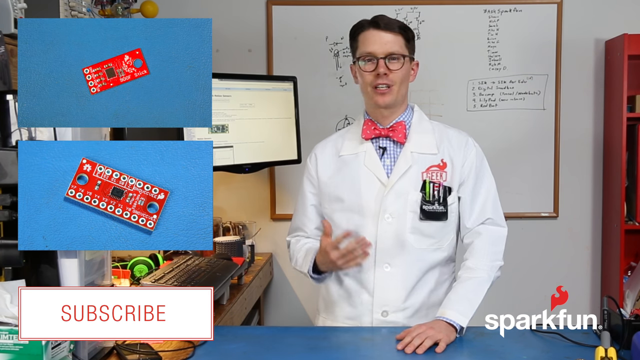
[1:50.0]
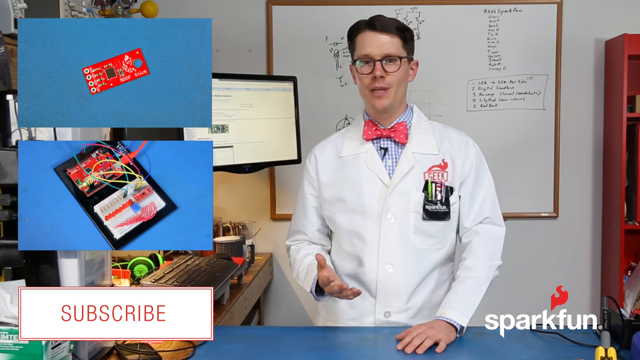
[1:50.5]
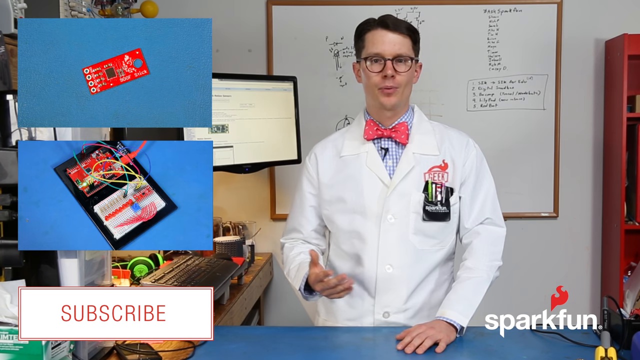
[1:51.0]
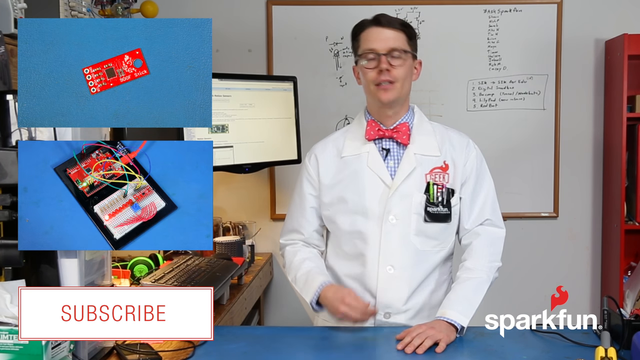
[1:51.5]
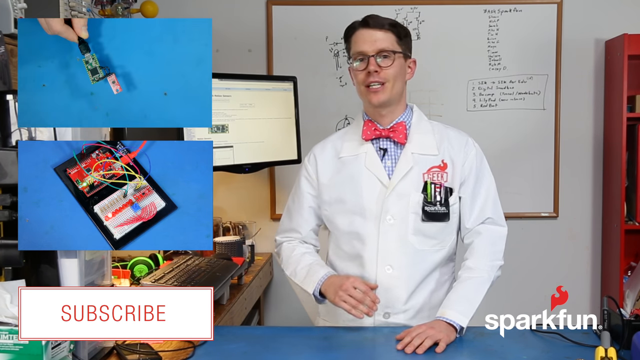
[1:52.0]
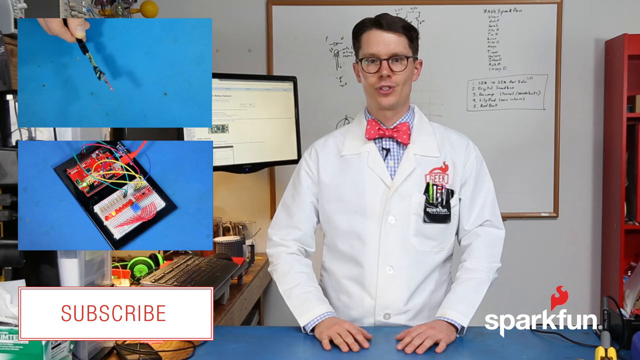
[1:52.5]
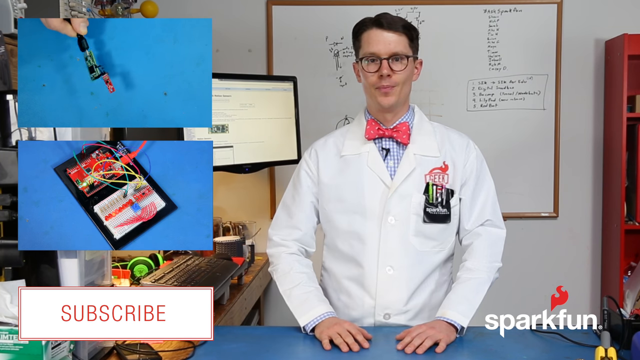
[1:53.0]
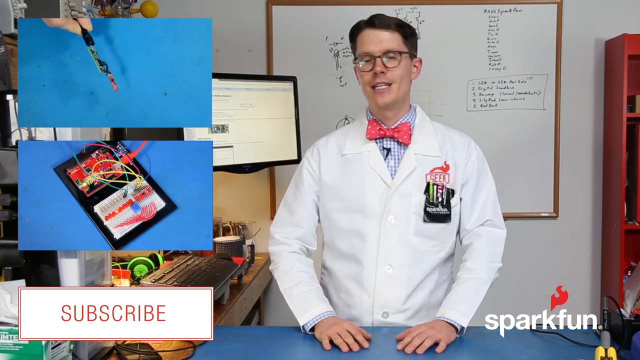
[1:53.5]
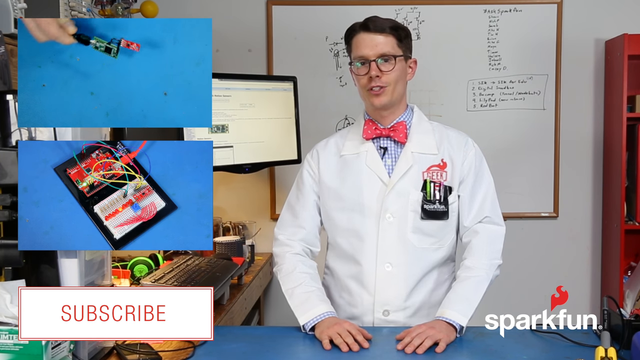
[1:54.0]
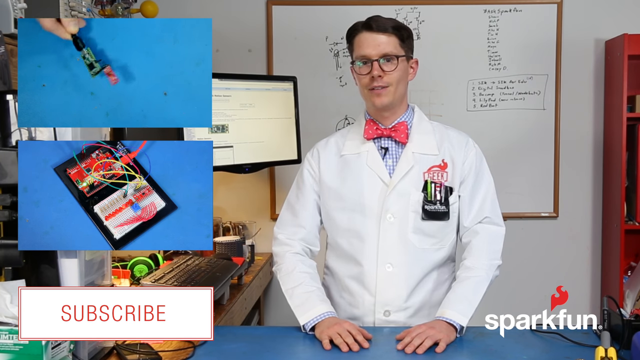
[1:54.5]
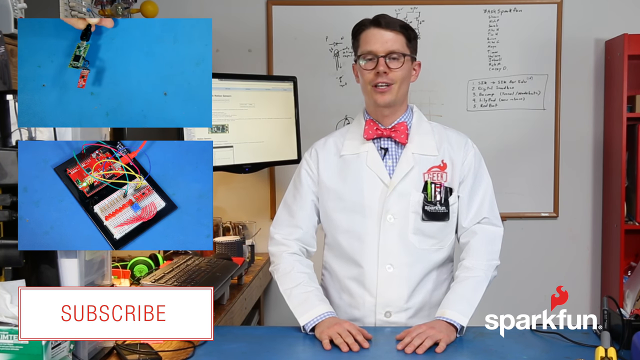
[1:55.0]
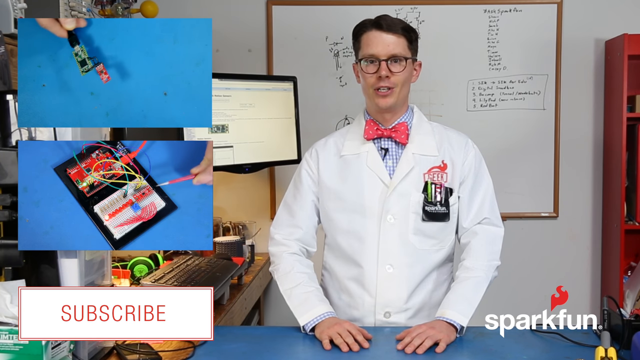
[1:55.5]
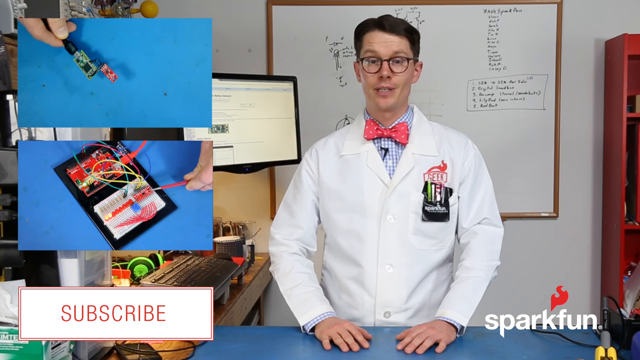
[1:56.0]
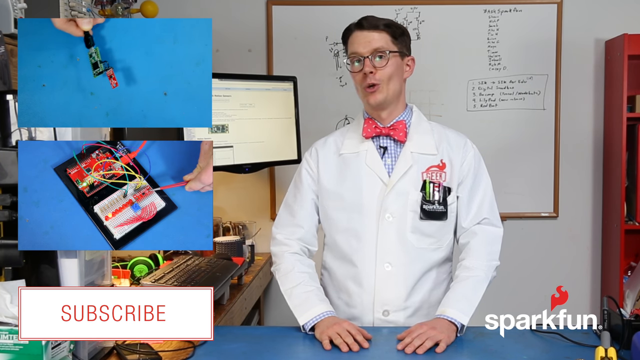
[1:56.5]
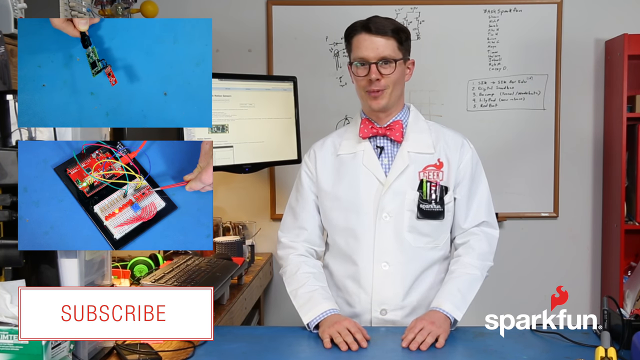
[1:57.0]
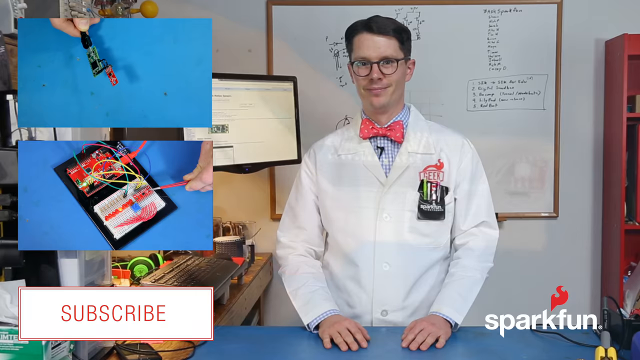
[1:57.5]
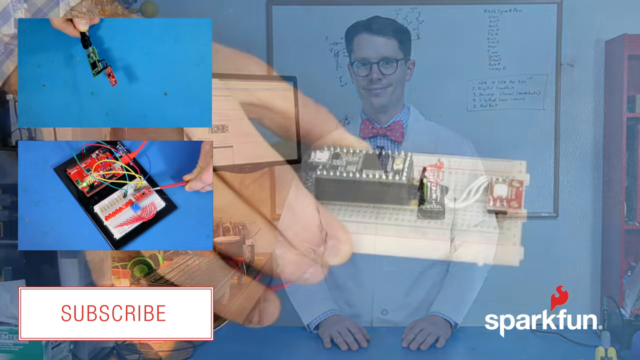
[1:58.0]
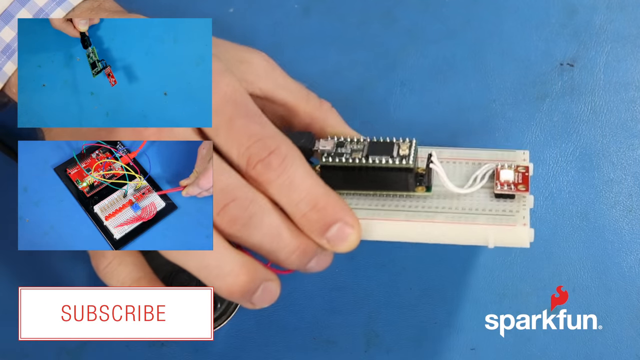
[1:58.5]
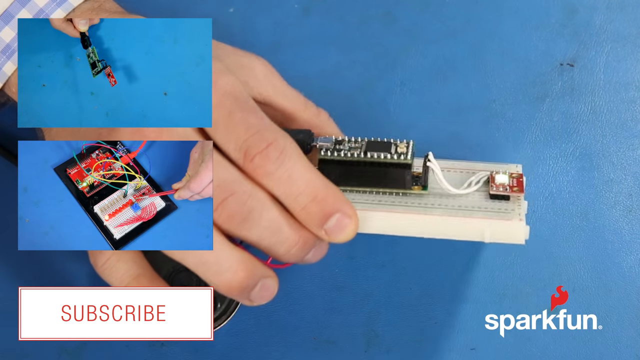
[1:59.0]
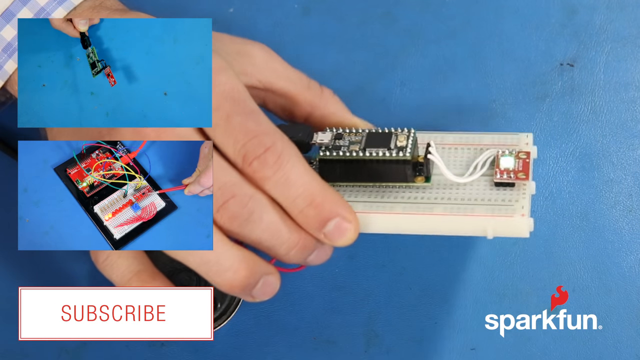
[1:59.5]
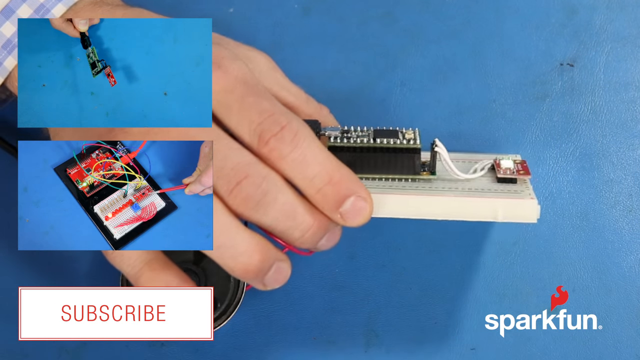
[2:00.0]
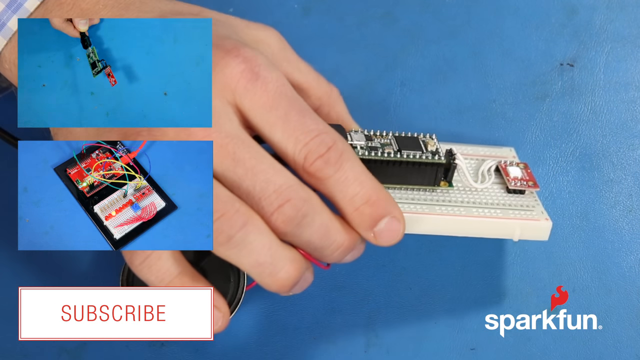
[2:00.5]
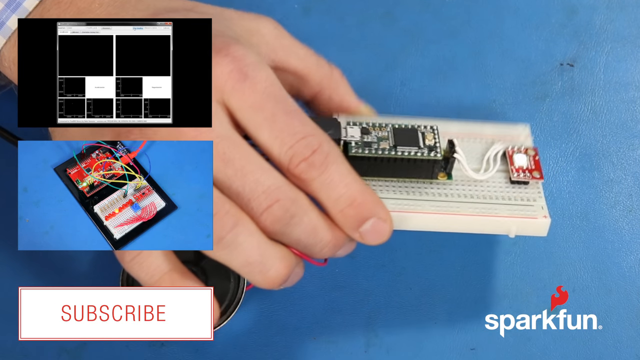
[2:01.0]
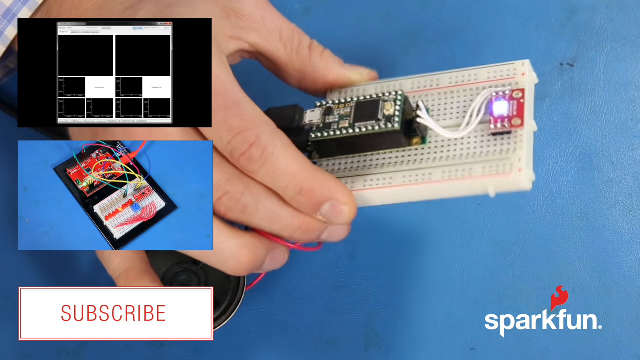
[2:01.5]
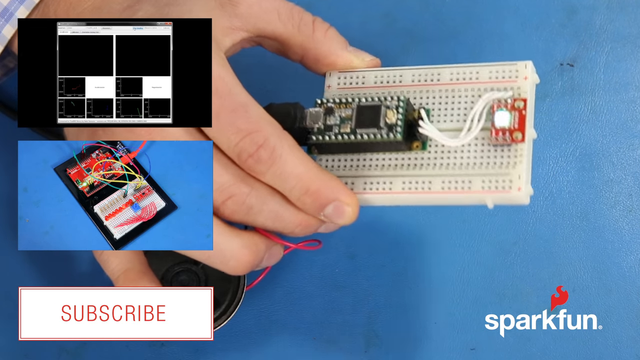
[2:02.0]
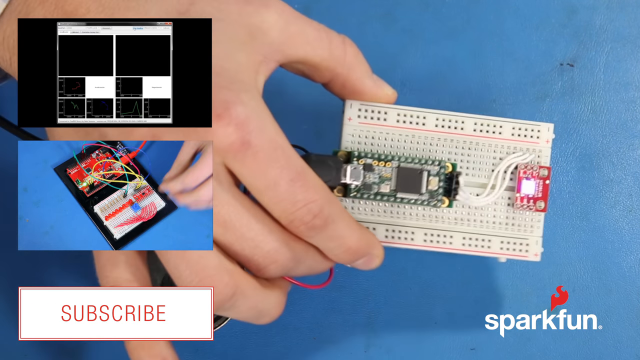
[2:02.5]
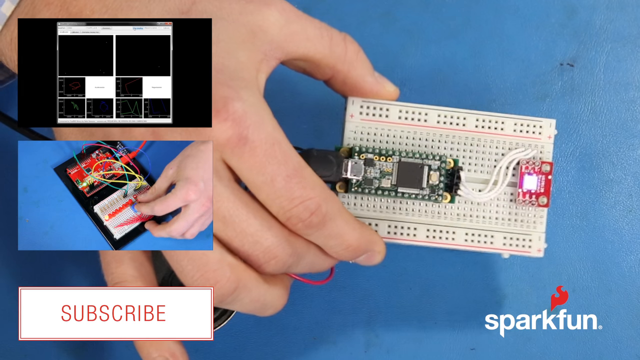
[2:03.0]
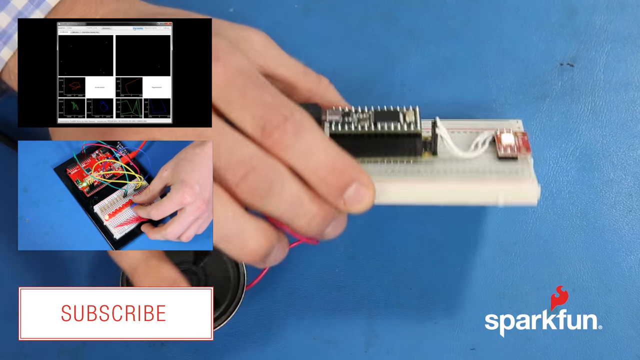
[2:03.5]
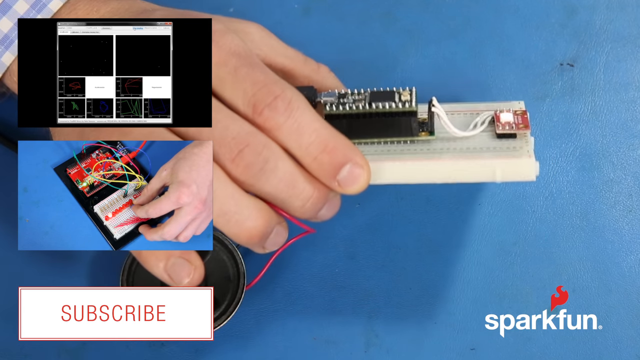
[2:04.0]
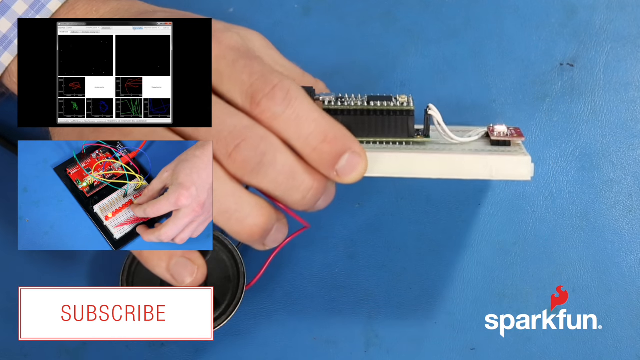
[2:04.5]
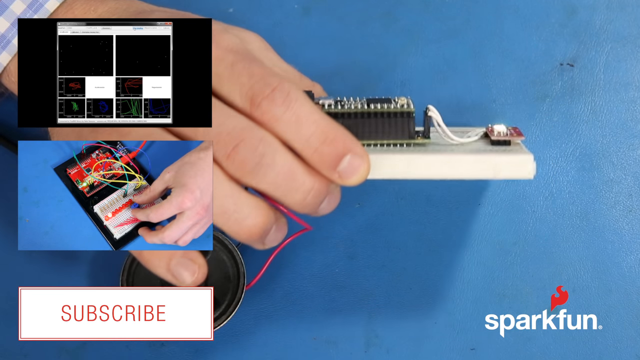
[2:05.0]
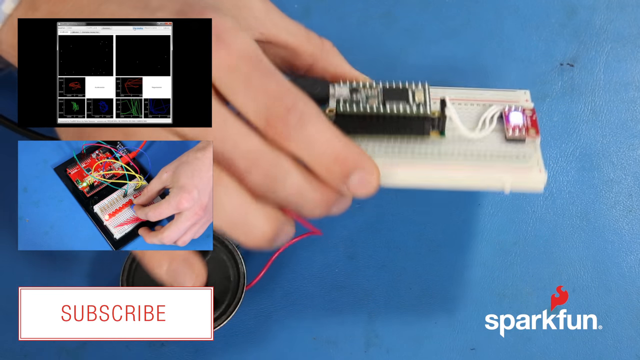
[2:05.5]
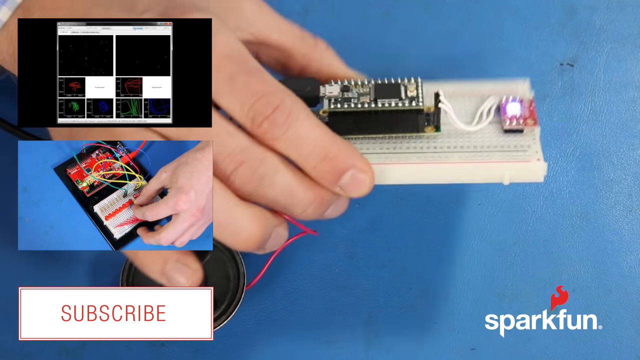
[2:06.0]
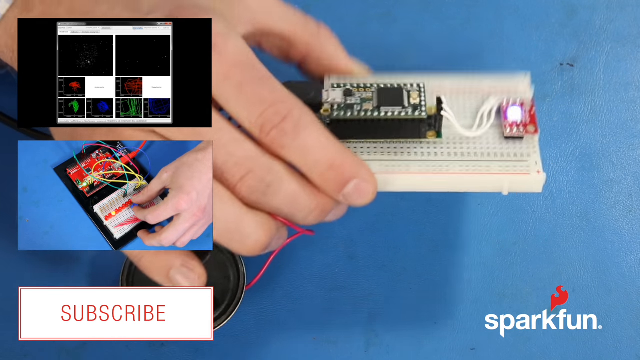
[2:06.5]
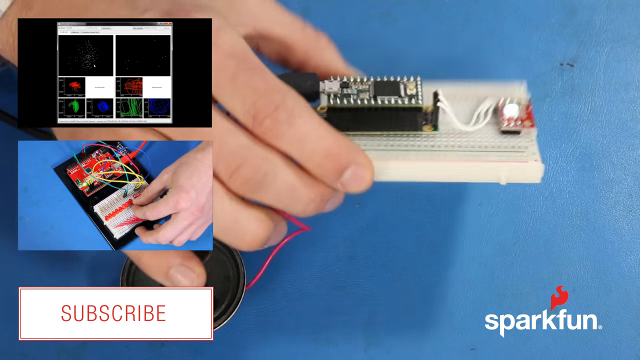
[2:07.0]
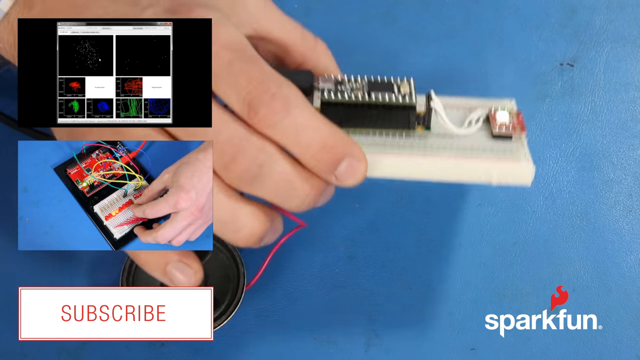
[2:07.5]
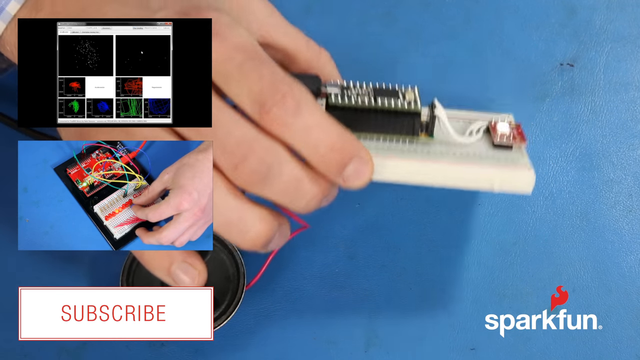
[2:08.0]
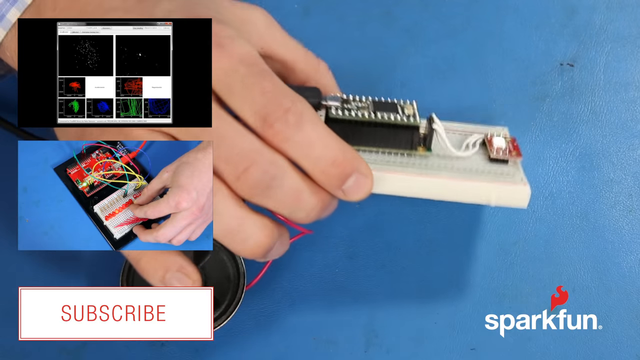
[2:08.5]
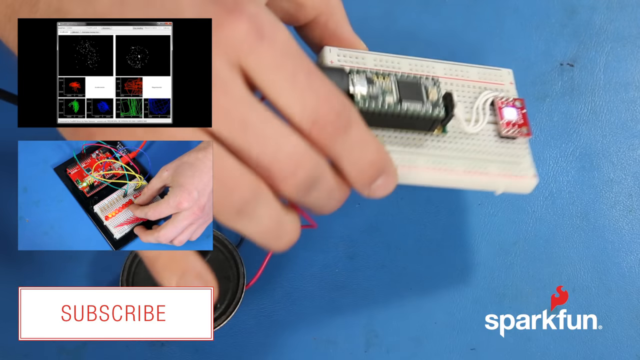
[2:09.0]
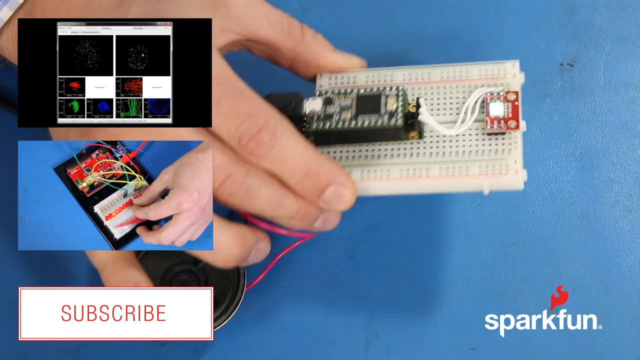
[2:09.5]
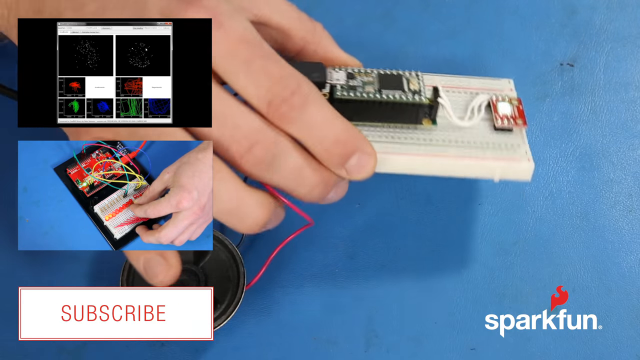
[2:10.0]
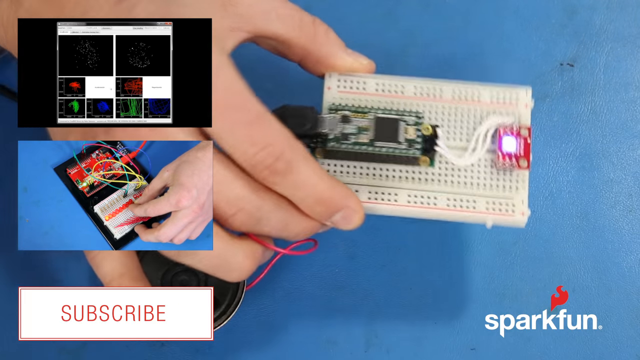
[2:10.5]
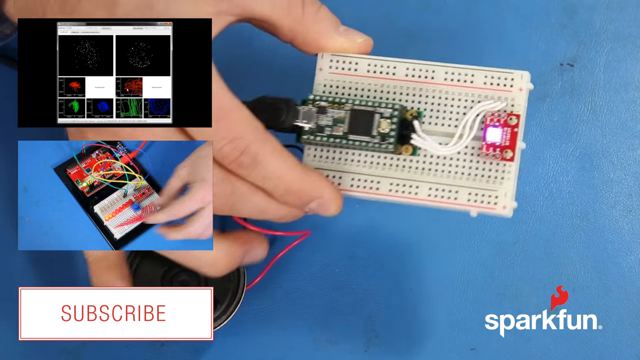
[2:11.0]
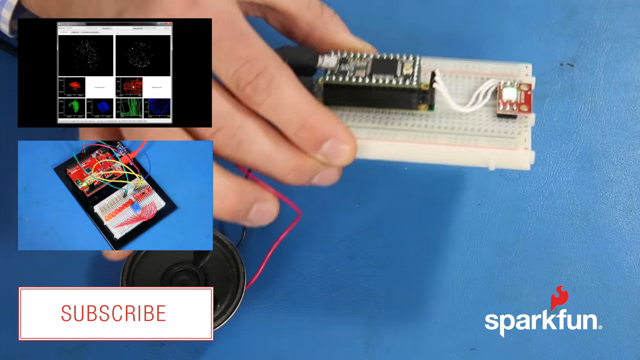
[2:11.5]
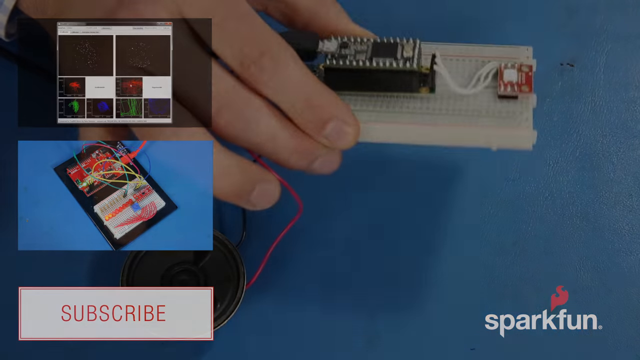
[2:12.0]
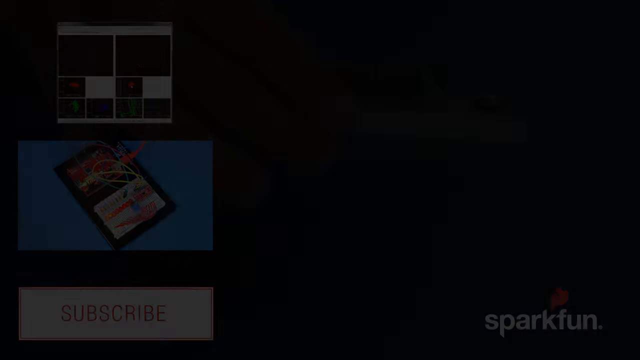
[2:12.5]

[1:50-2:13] The scientist is shown in a white lab coat with a gingham shirt, a pink bow tie, glasses and parted brown hair. He is a white male, and a pink "GEEK" logo is above his right-hand pocket, where a pocket protector is filled with pens. He raises his right hand about halfway up his torso and begins to speak. Behind him is a whiteboard with some formulas written on it; a dual monitor is to his back left and a red shelf to his back right. To his left are two videos and the option to subscribe to his channel; the subscribe button is white with pink text and a pink border. The video on the left keeps playing while the scientist talks. A slow fade changes the scene to the scientist grabbing the device, a white plastic piece with many holes, on which two chips, one green and one red, are wired together with three white wires. He moves it back and forth, displaying it from all different angles. The screen fades to black.